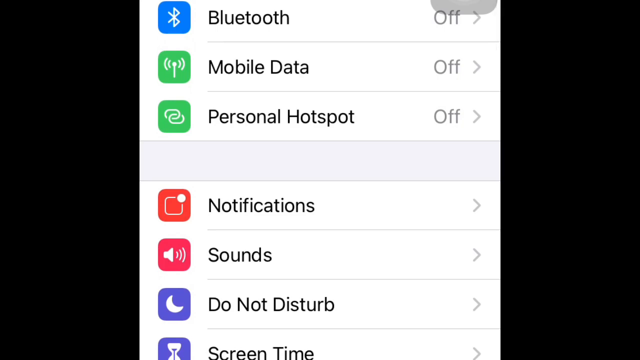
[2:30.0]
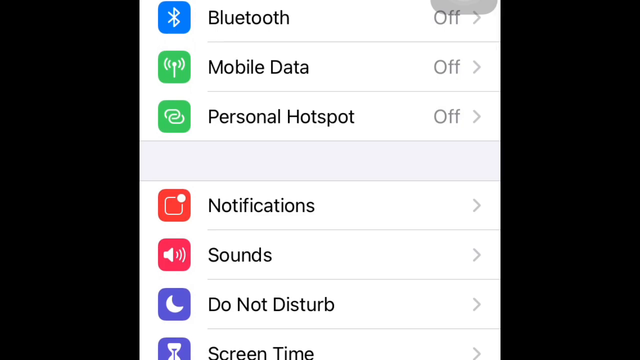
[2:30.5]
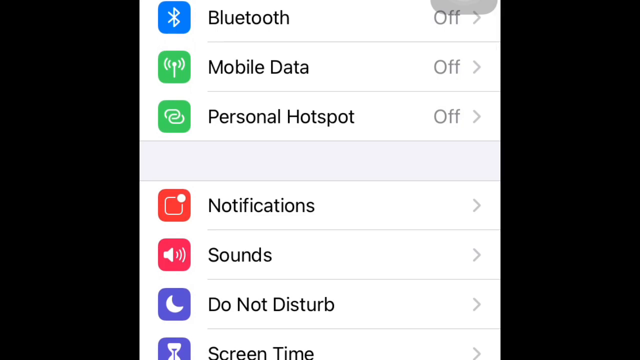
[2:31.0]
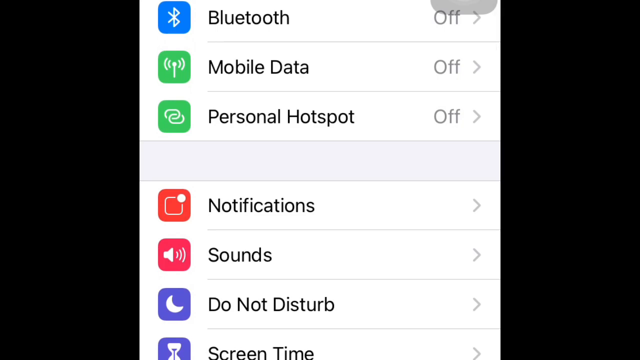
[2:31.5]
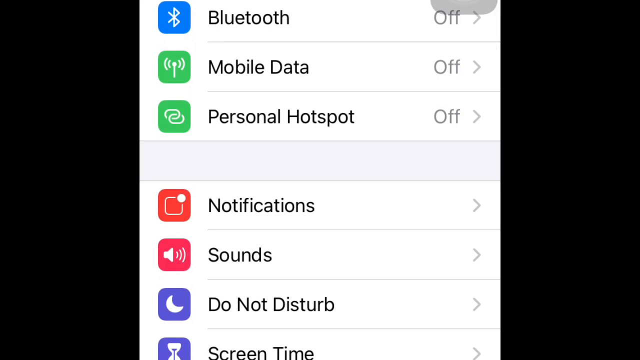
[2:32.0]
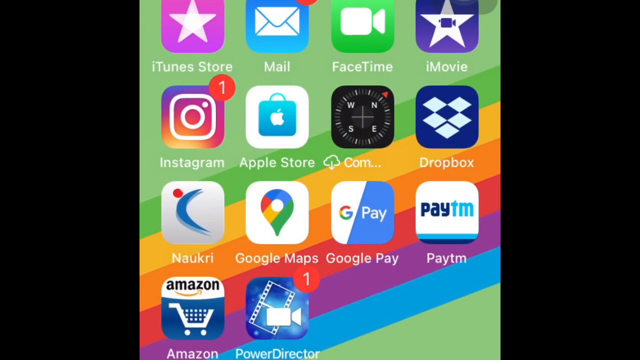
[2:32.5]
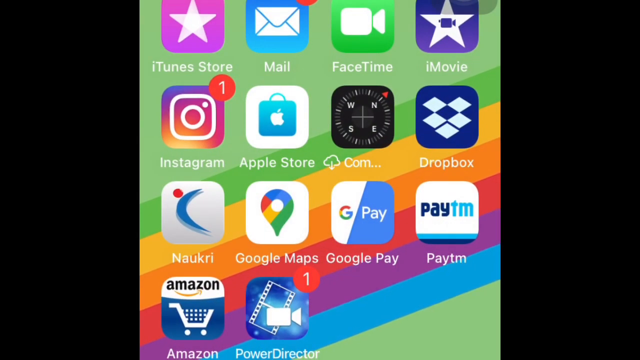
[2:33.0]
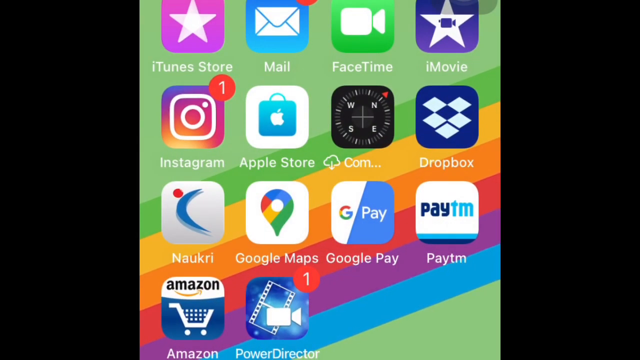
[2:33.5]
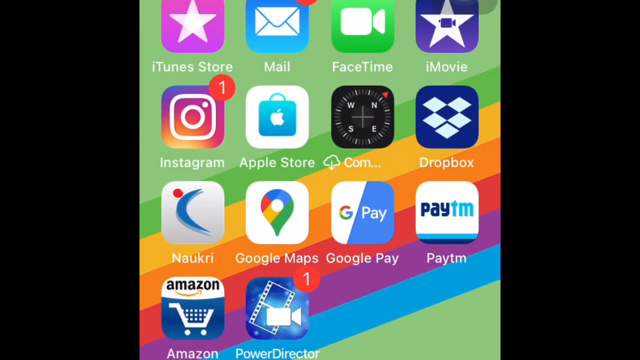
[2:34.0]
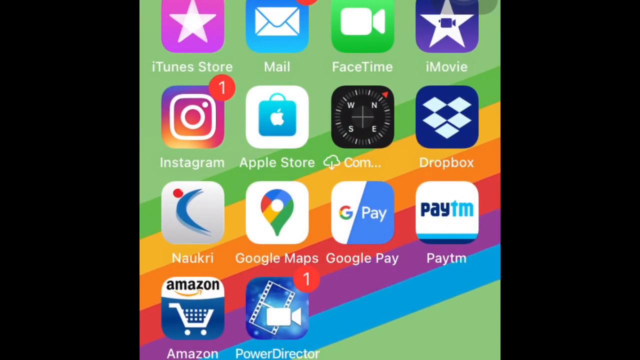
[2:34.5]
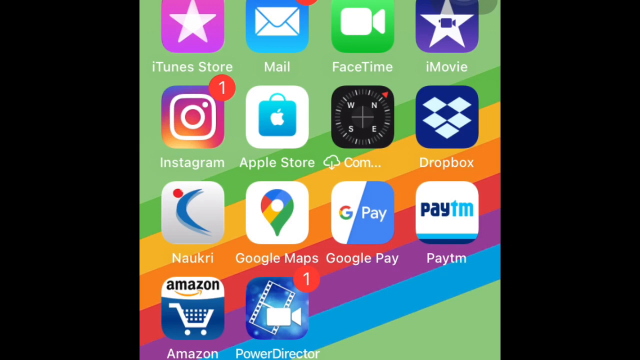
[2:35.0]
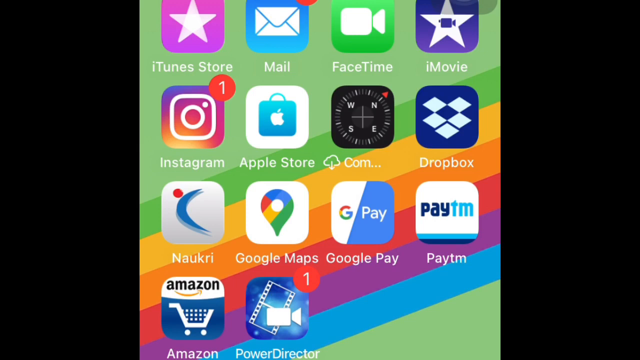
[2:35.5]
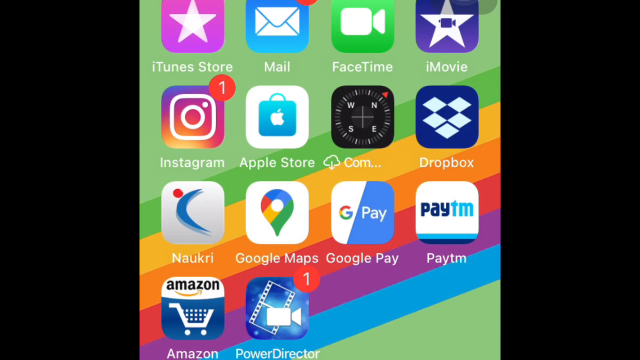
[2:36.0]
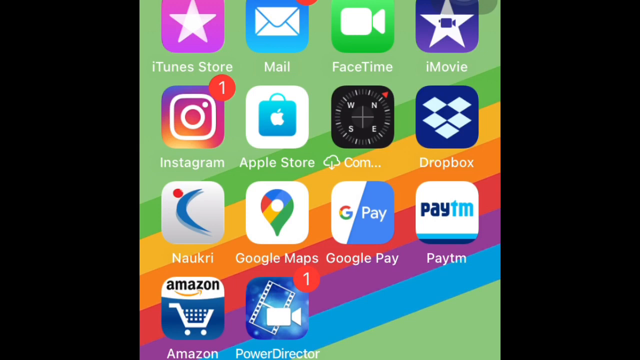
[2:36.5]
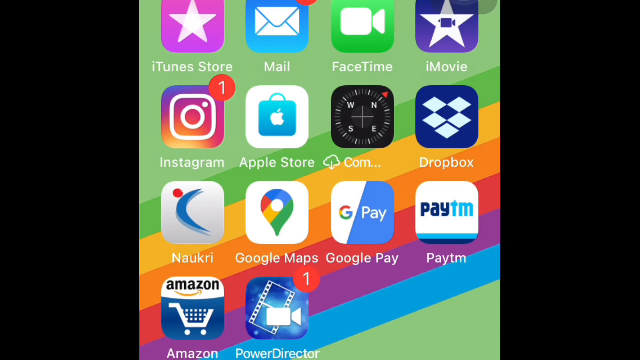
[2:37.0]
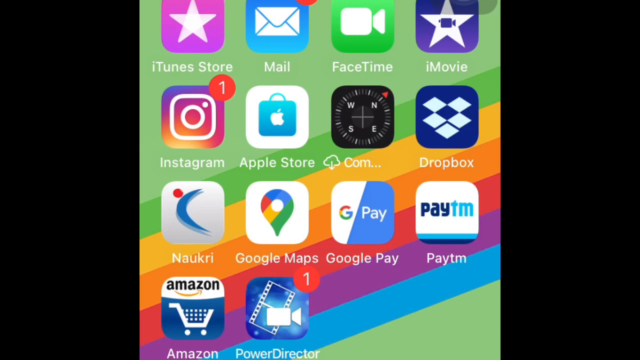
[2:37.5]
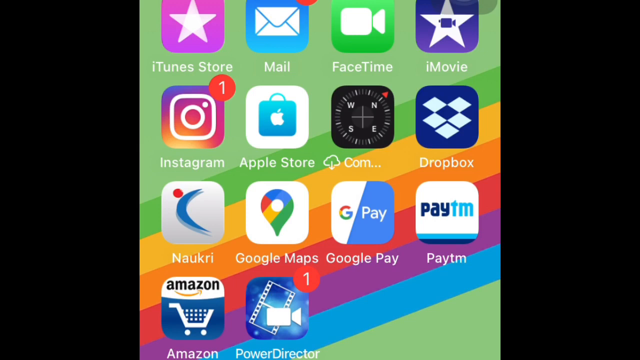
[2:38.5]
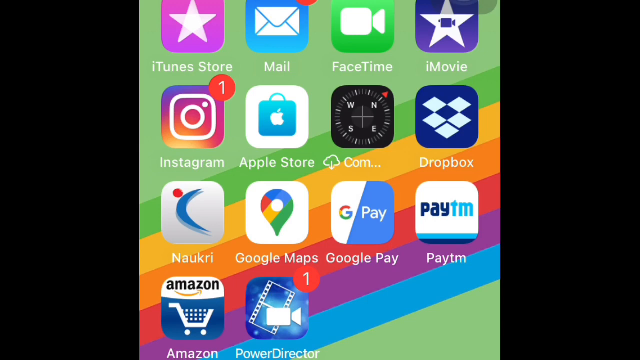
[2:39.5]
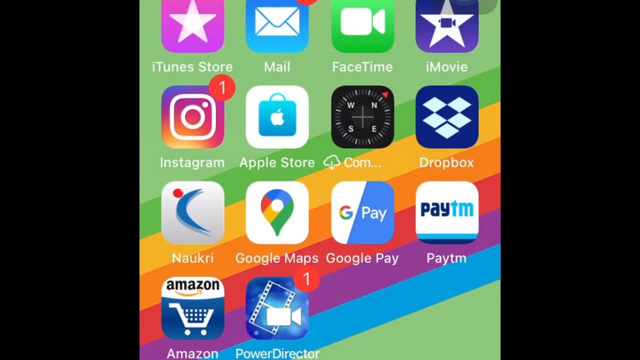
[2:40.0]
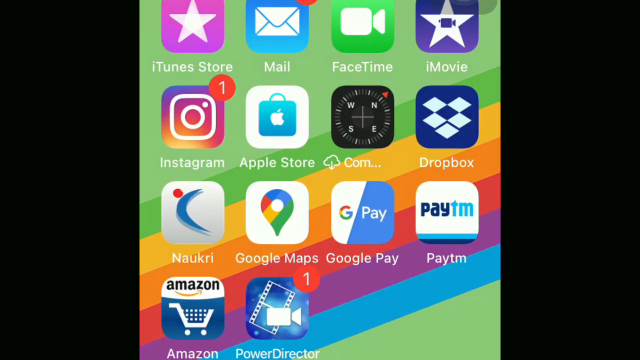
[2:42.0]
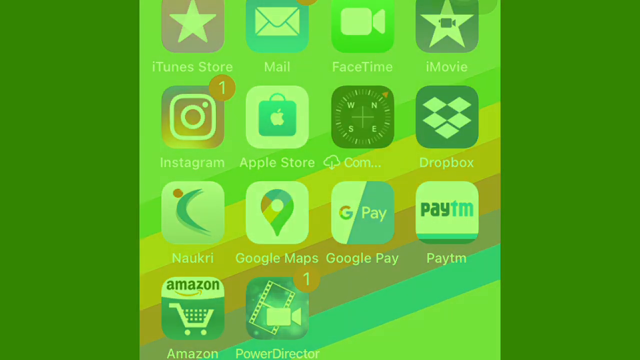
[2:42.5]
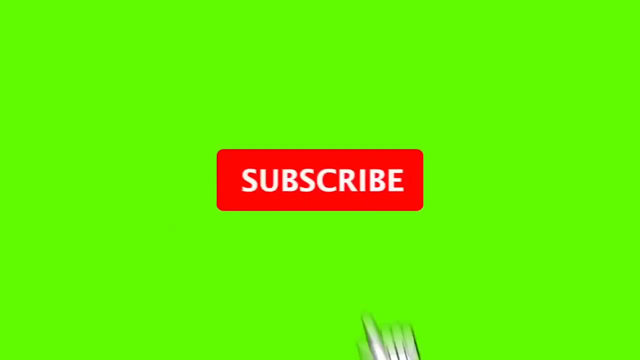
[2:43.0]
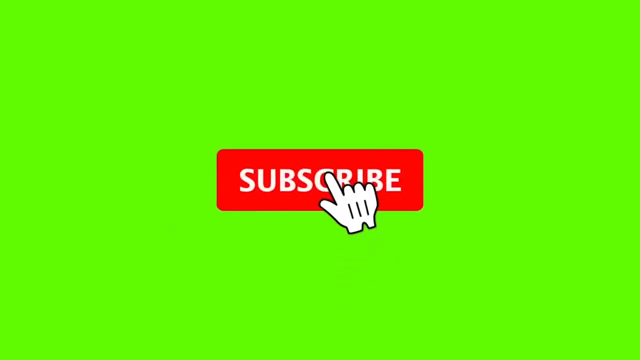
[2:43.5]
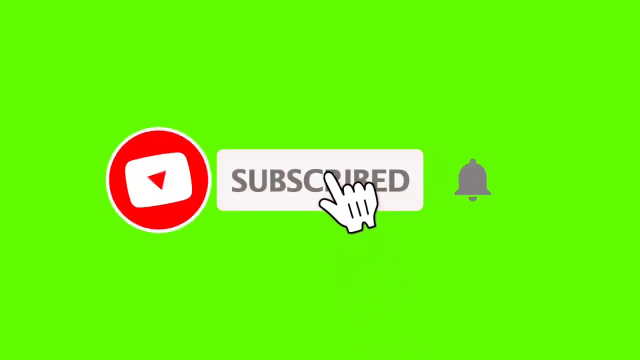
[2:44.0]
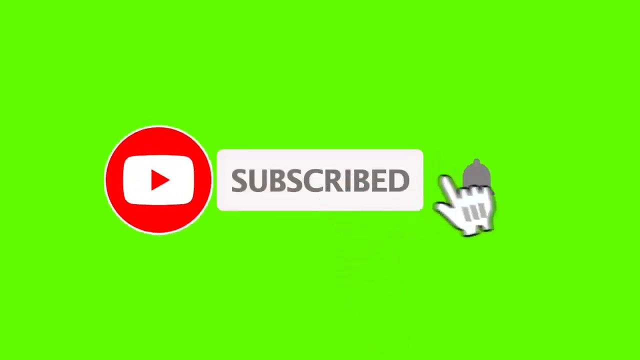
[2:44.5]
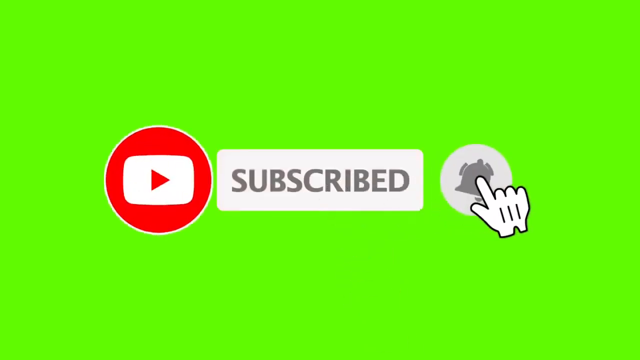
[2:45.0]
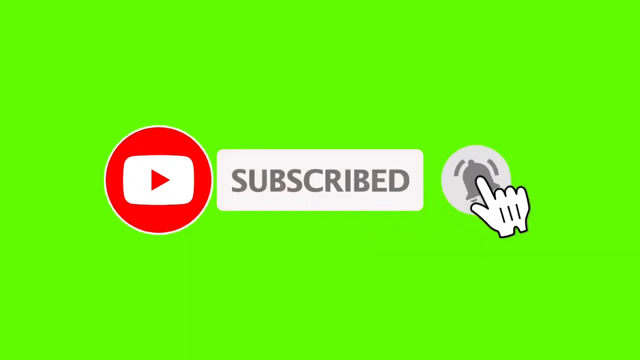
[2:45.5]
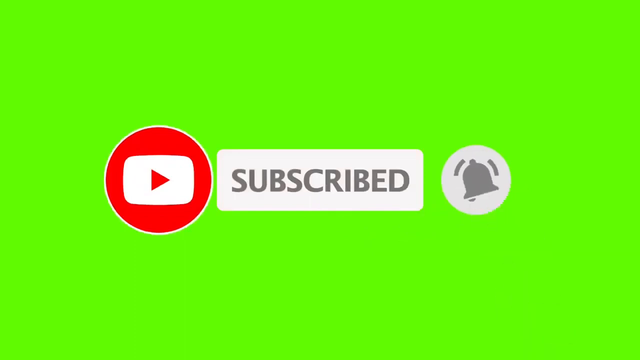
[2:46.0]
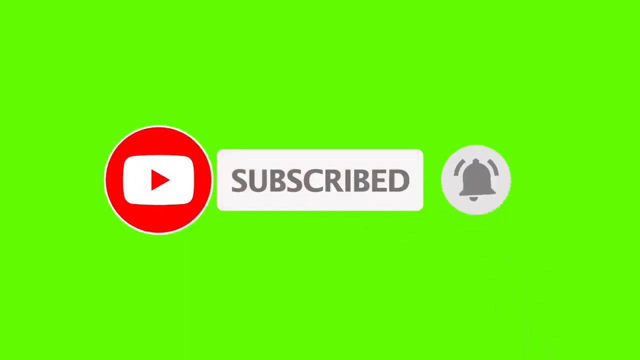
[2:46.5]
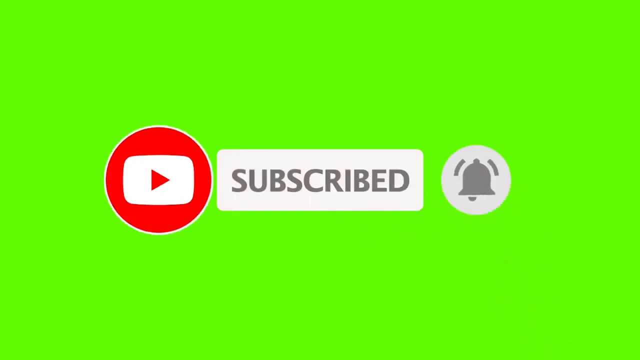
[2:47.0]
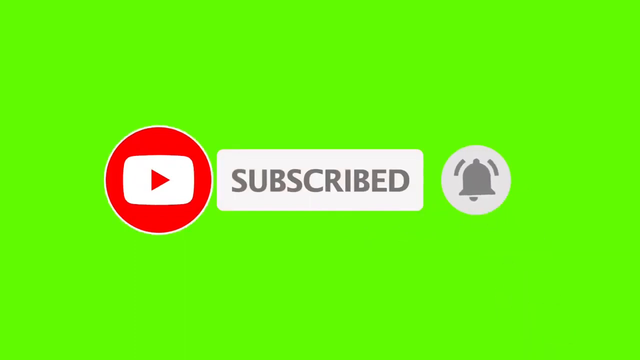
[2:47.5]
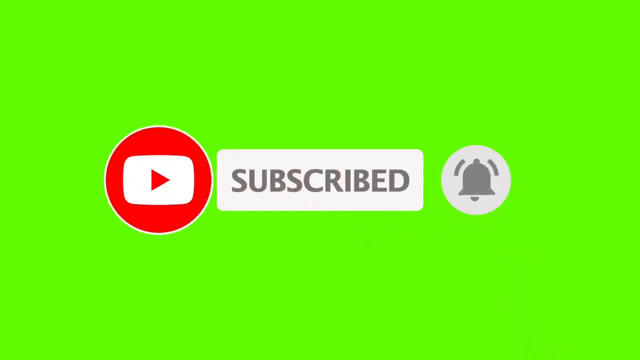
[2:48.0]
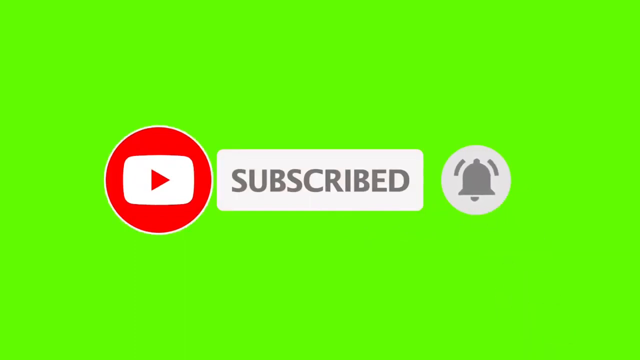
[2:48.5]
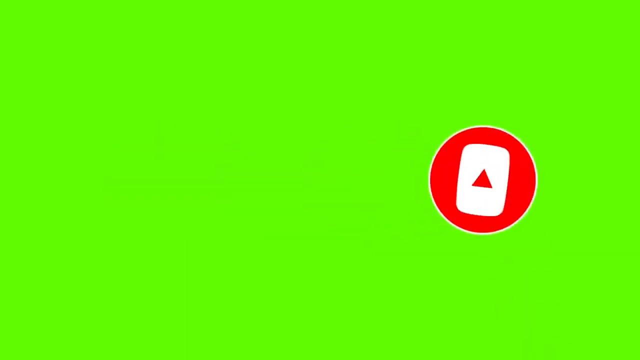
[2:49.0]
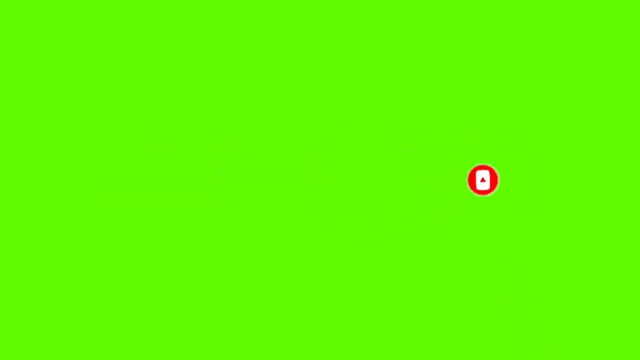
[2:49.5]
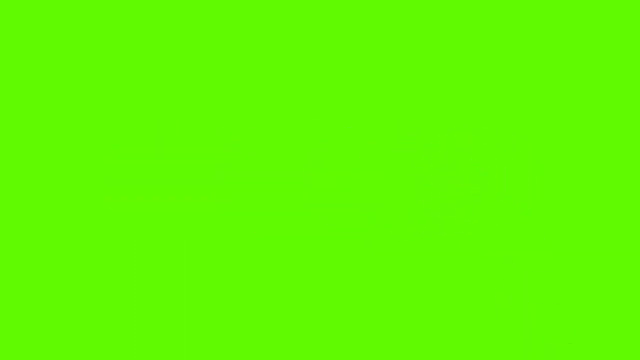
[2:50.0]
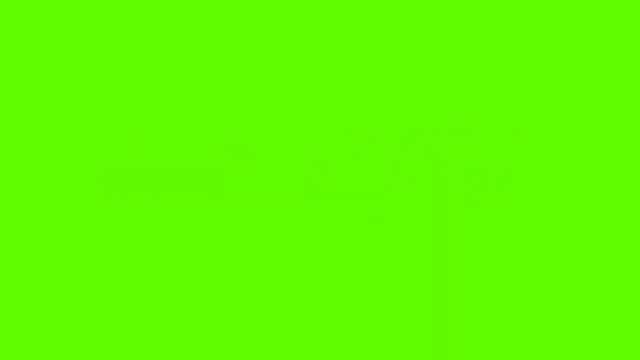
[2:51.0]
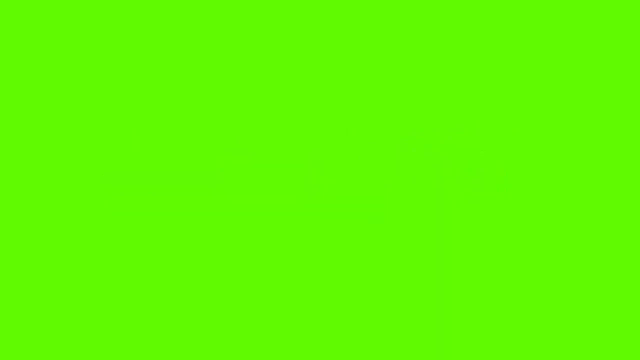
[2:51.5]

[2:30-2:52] The settings screen shows Bluetooth, mobile data and personal hotspot at the top, all toggled off, then a gray bar, followed by notifications, sounds and do not disturb, each with its icon to the left. The view returns to the main page of apps: the top row, from left to right, is iTunes Store, Mail, FaceTime and iMovie; then Instagram, Apple Store, Calm and Dropbox; then Nopri, Google Maps, Google Play, Paytm, Amazon, and another movie app, PowerDirector. It fades to an all-green background with a red subscribe button in the center; a little gloved hand comes up and taps it, turning it white. To the left is the YouTube logo, red with a white border and a white rectangle inside with a red play button, and to the right is a gray bell icon.